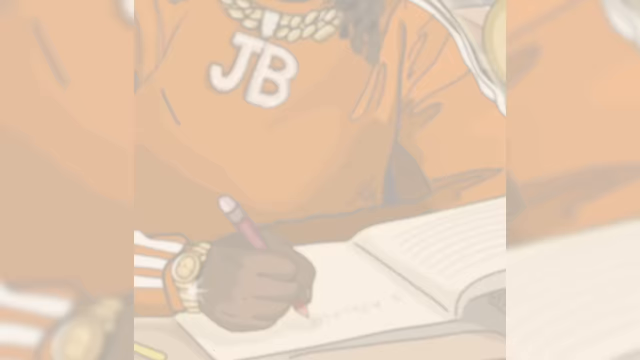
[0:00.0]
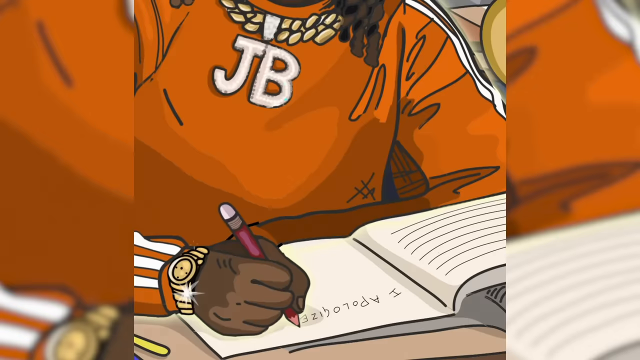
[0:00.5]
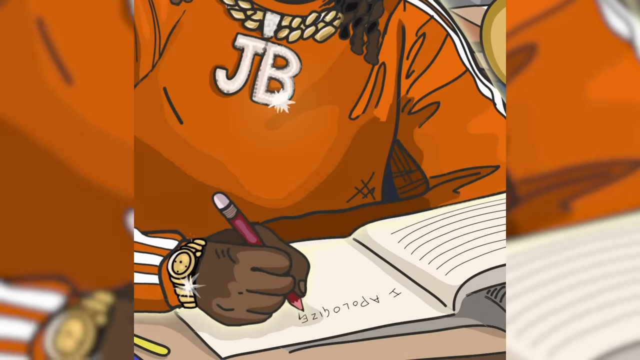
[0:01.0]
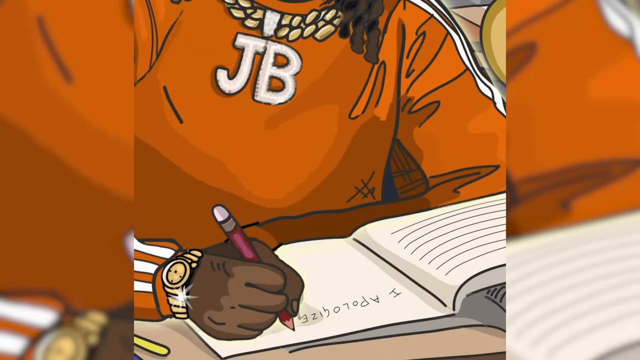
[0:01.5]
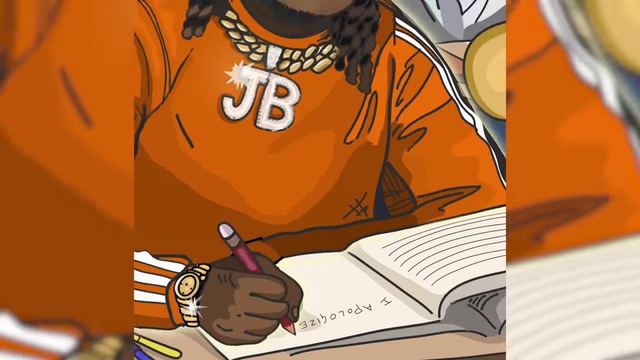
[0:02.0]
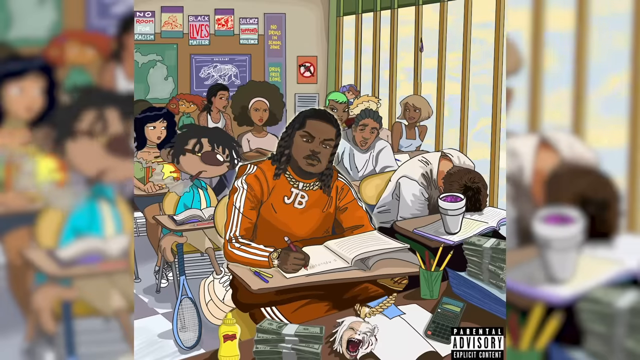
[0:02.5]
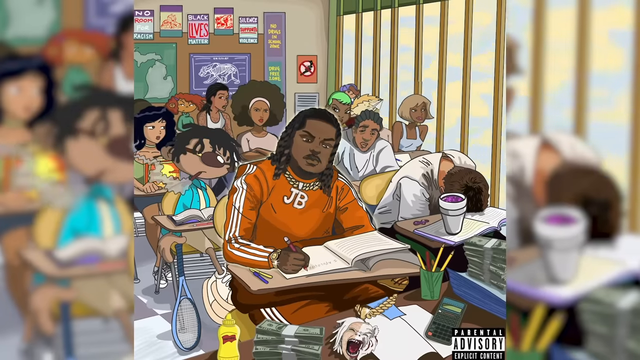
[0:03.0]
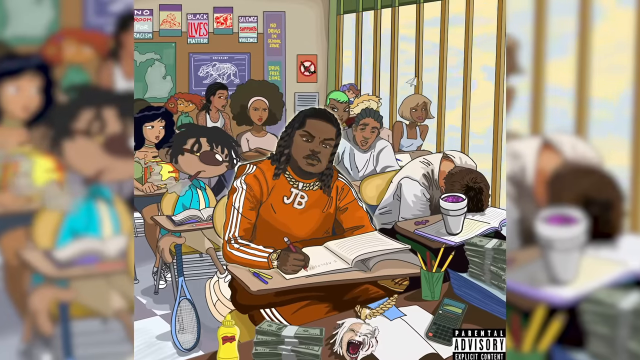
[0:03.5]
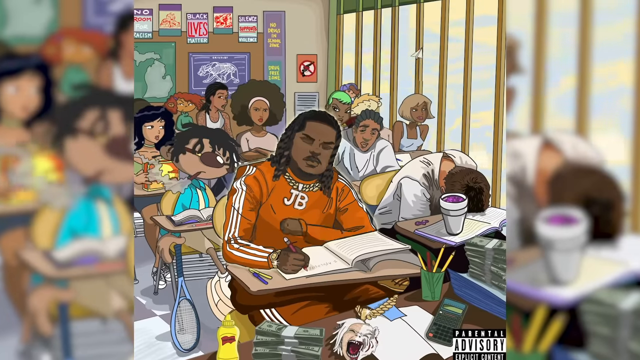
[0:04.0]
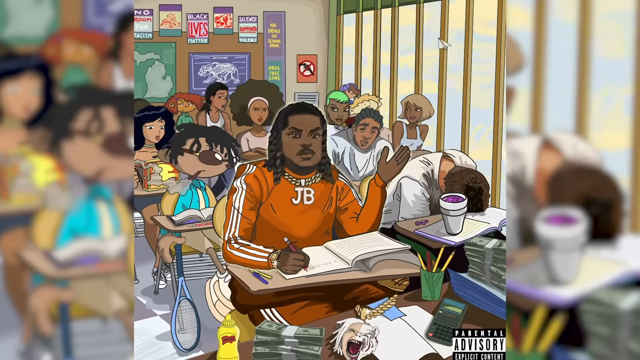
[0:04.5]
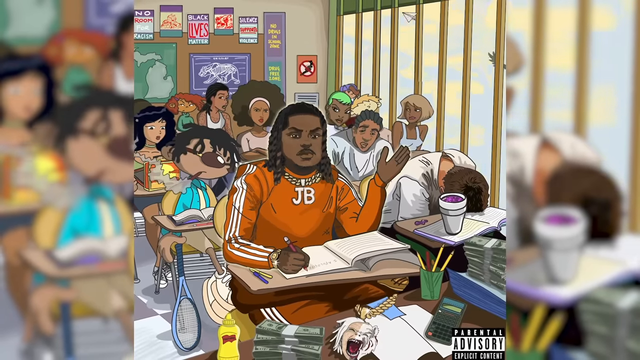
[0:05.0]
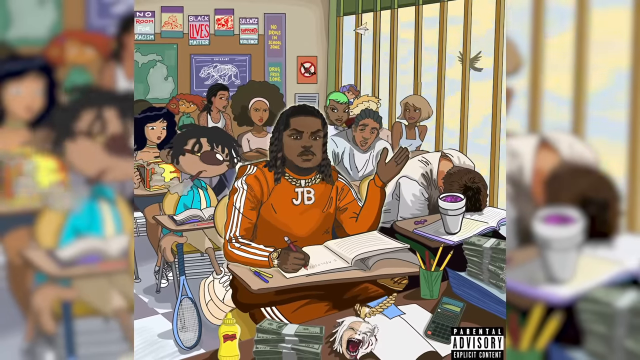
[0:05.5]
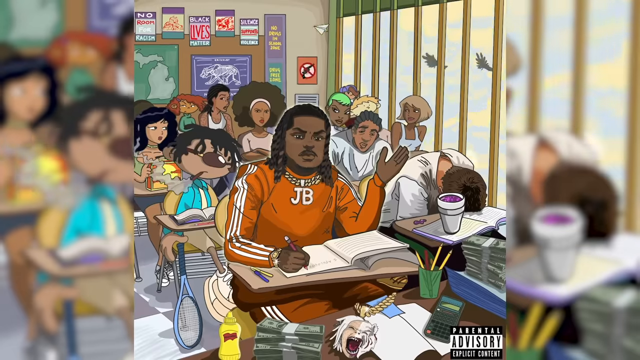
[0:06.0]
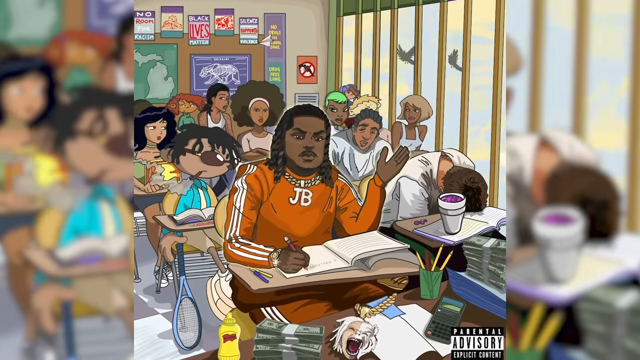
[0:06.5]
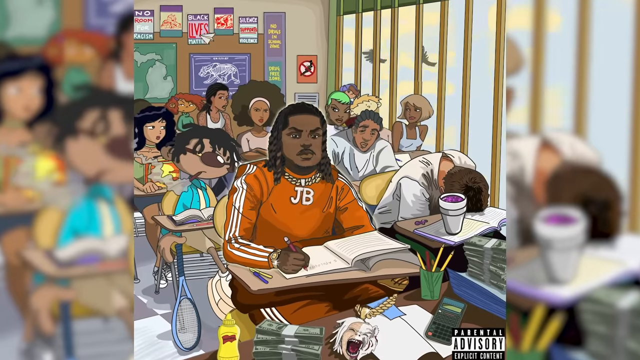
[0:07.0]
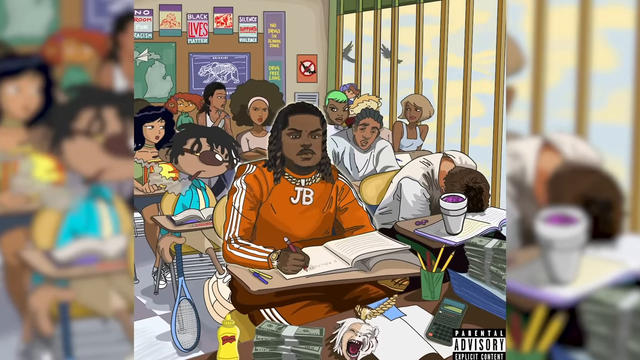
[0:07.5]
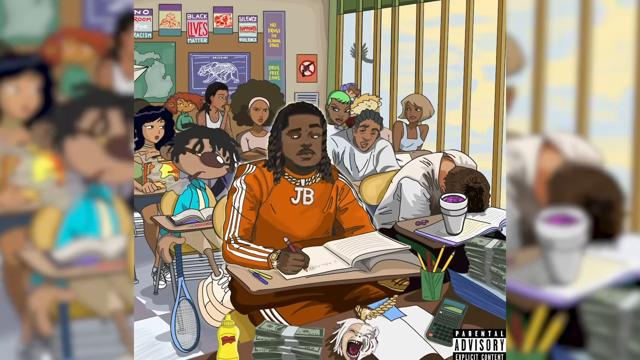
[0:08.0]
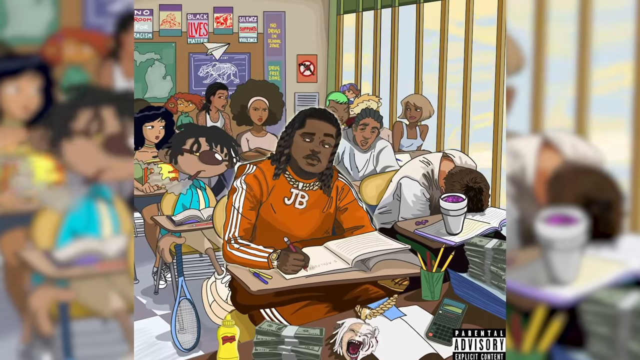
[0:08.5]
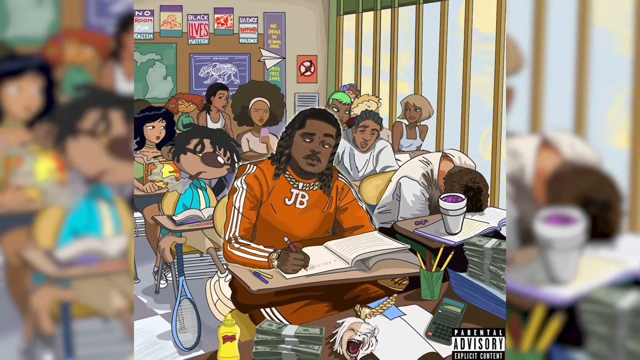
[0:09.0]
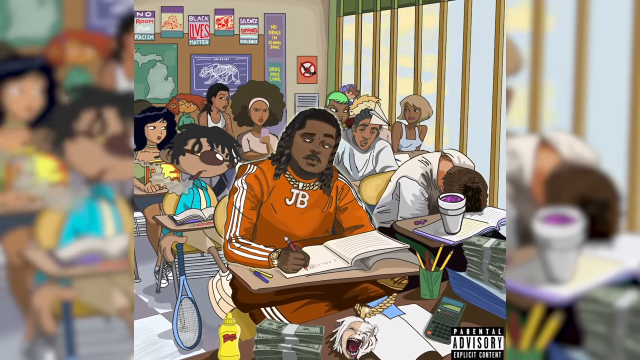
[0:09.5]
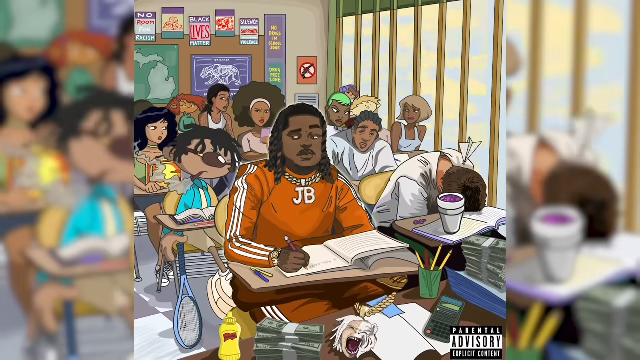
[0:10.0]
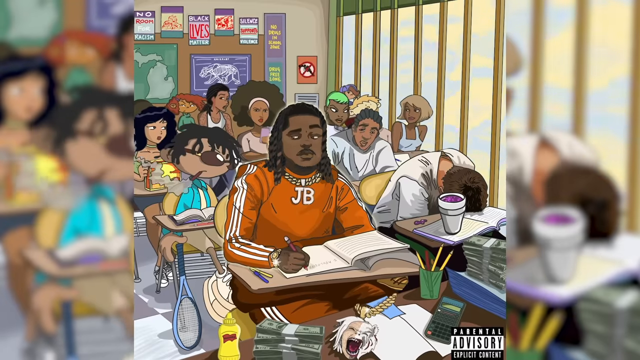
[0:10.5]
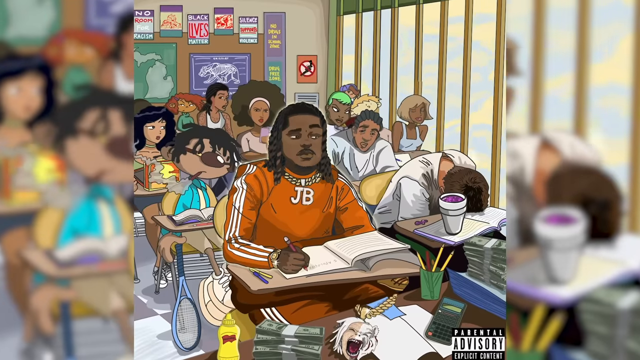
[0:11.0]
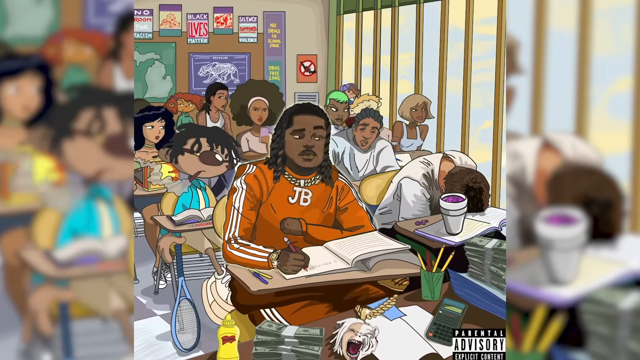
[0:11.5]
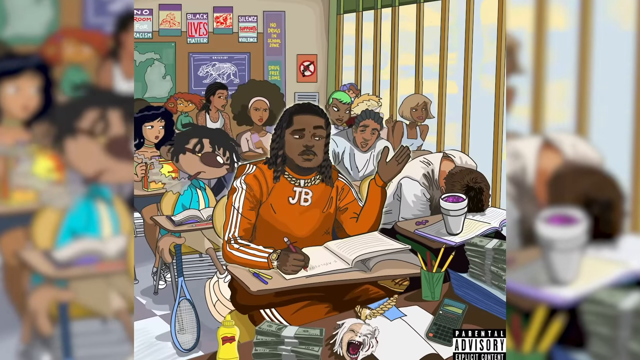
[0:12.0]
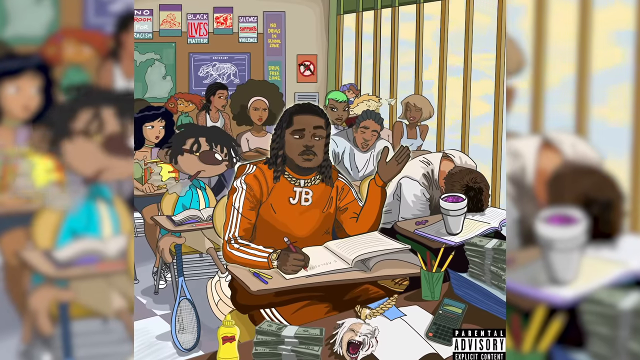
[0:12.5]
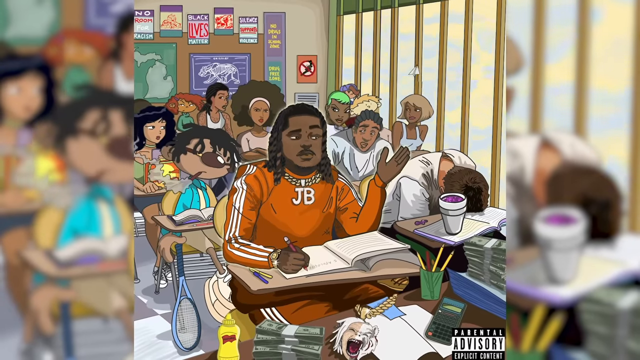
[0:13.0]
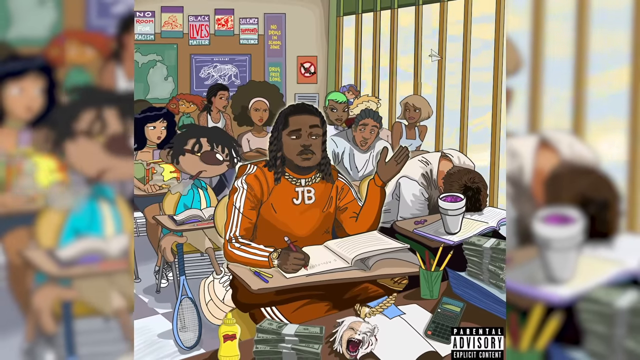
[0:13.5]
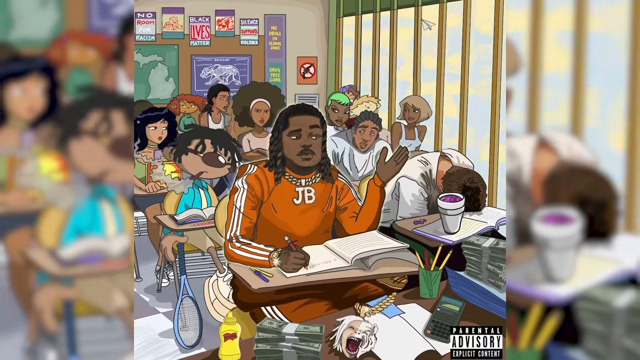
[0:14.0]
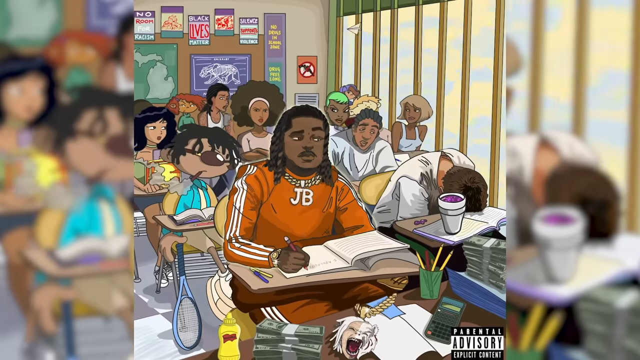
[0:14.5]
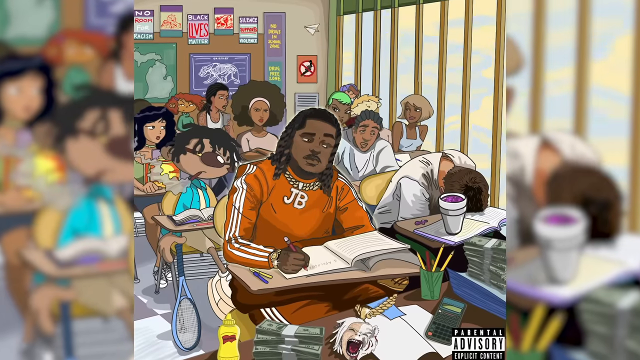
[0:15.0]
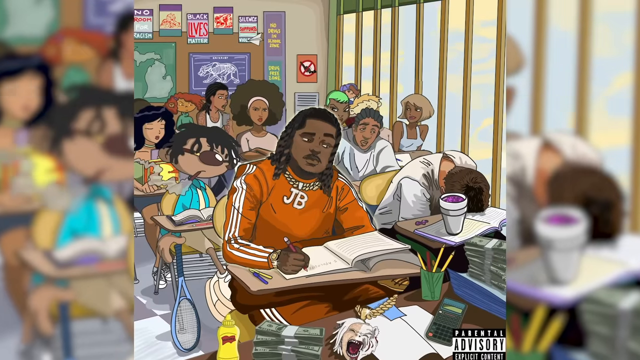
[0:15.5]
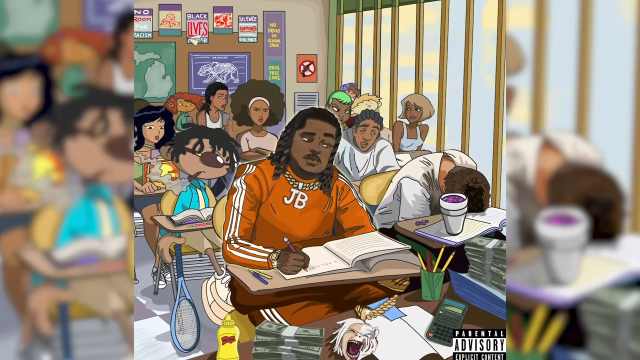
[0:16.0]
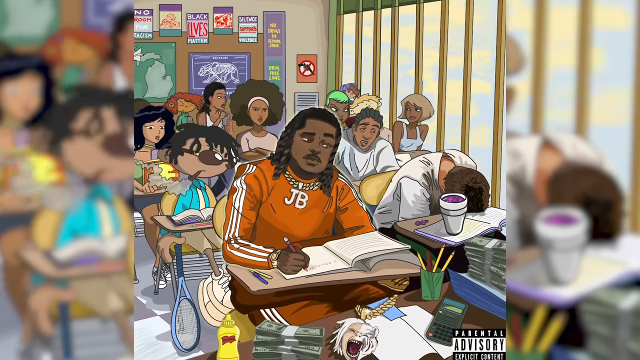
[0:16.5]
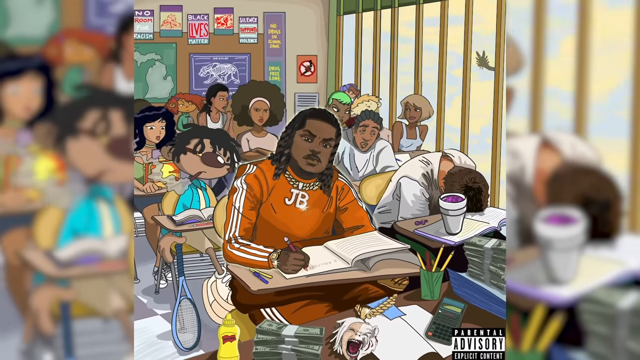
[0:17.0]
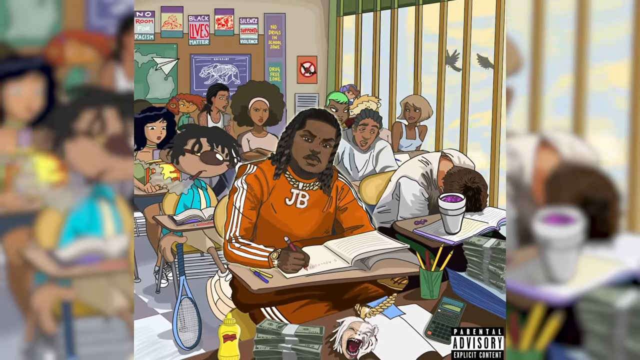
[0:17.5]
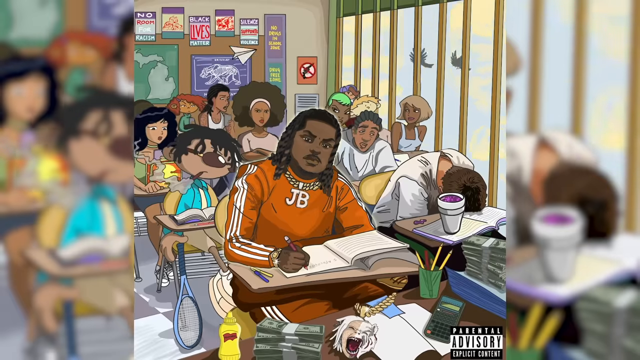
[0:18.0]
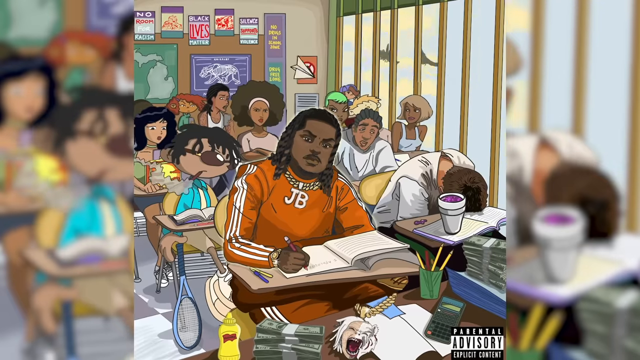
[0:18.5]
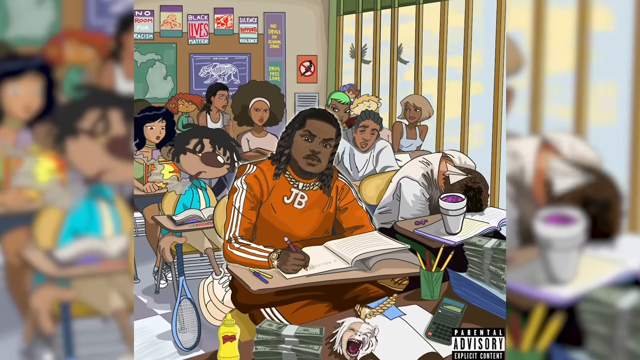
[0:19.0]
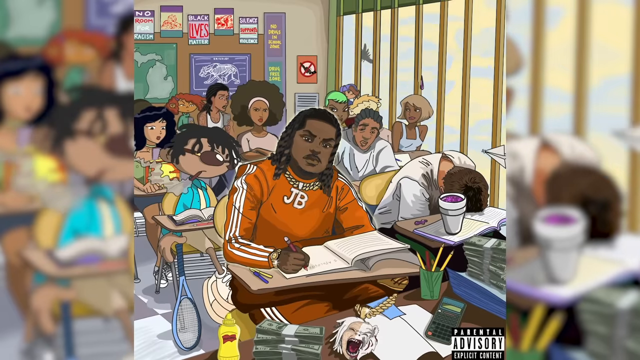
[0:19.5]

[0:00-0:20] An animated, cartoon-style video shows a teenage guy in an orange sweatshirt with stripes running down it. In the bottom corner is the black-and-white parental advisory sticker, suggesting this is possibly a rap music video. The guy is African American and sits in what looks like a high school classroom. He wears a chain around his neck that says "JB", has long thick braids and a mustache, and his pants are orange and white. Other teenagers sit at their desks looking around the room, and most of them look very disinterested in class. Behind him is a funny-looking character who is smoking, possibly drugs. A young girl sits behind that character. There are a couple of young girls, one with a blonde bob and another with a big afro, along with some other guys. All of these characters are African American except the one sitting next to the main guy, who appears to be white, judging by his neck. That student has his head down completely on a desk with a book open, and on his desk is a styrofoam cup holding a purple drink, more than likely meant to represent some kind of alcohol or drug concoction. Doves fly around outside, and a paper airplane goes by in the classroom. A map is visible, and the teacher's desk is full of cash money, a bottle of mustard and some other miscellaneous things.